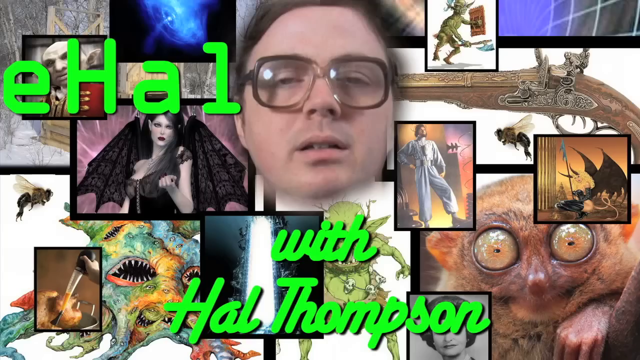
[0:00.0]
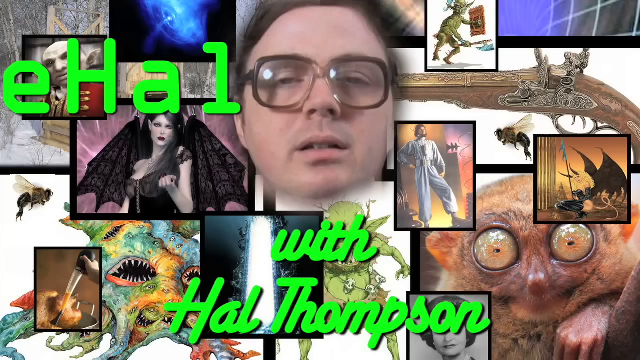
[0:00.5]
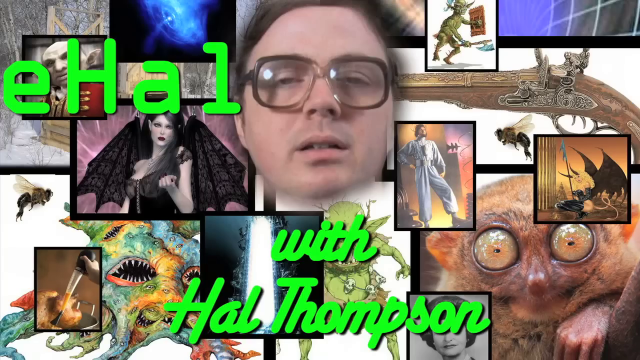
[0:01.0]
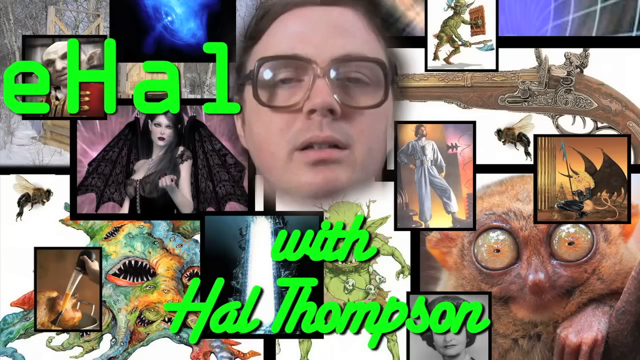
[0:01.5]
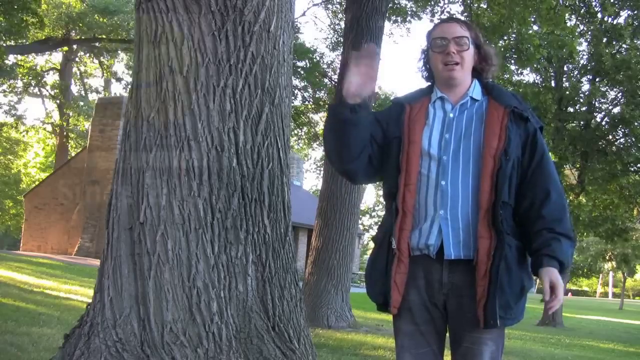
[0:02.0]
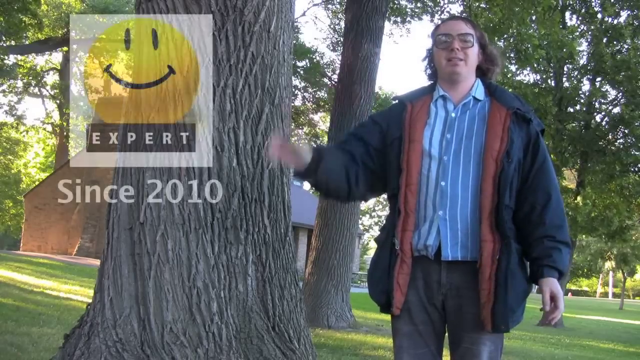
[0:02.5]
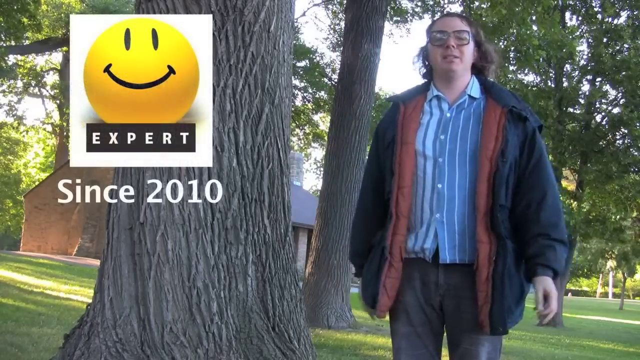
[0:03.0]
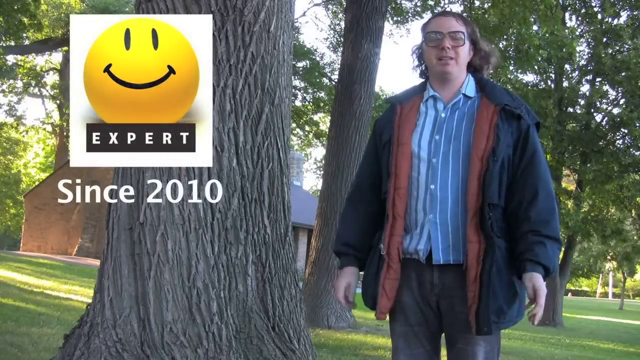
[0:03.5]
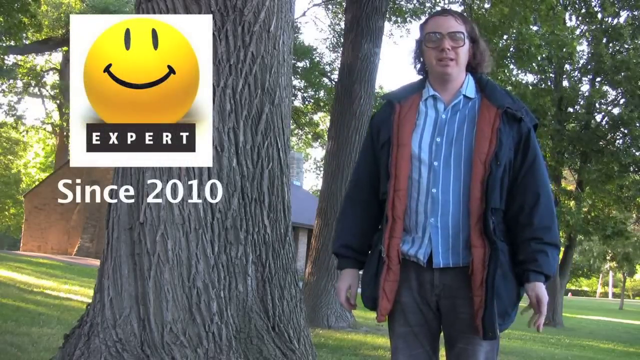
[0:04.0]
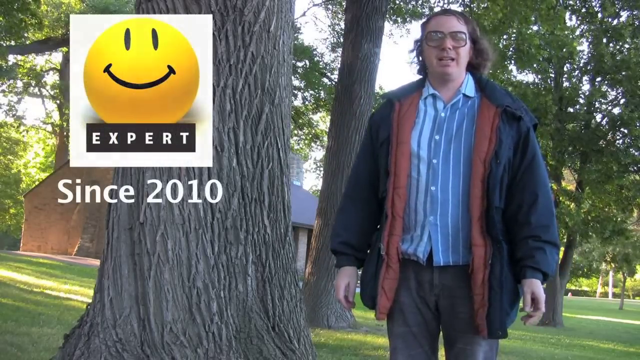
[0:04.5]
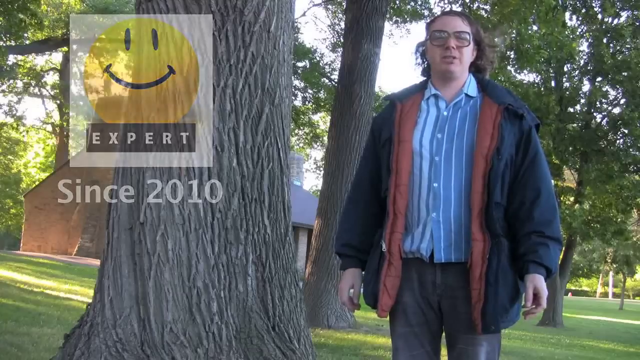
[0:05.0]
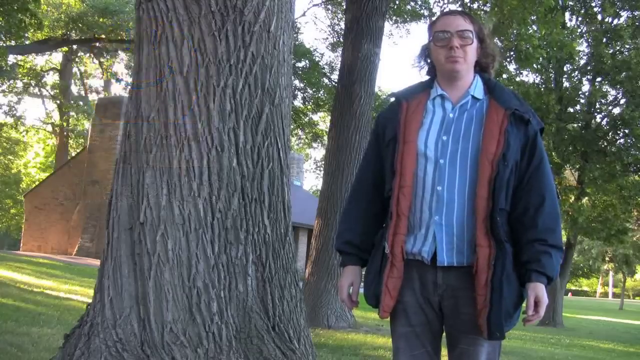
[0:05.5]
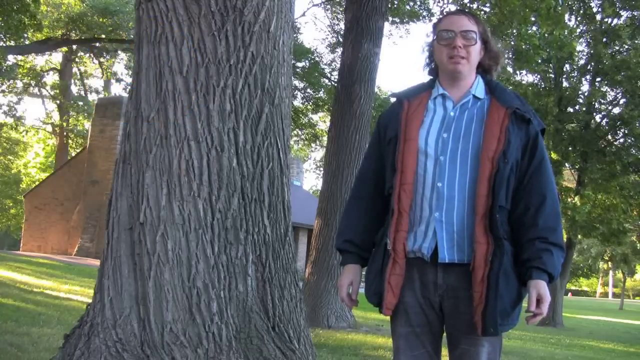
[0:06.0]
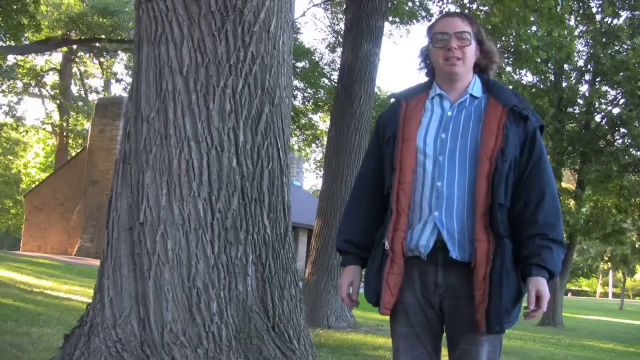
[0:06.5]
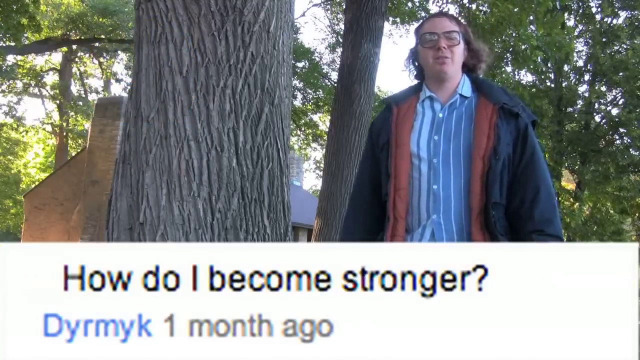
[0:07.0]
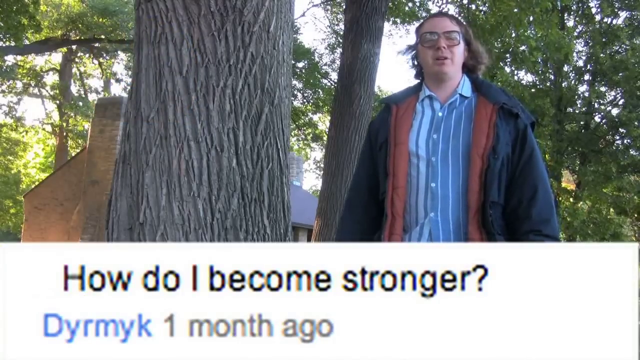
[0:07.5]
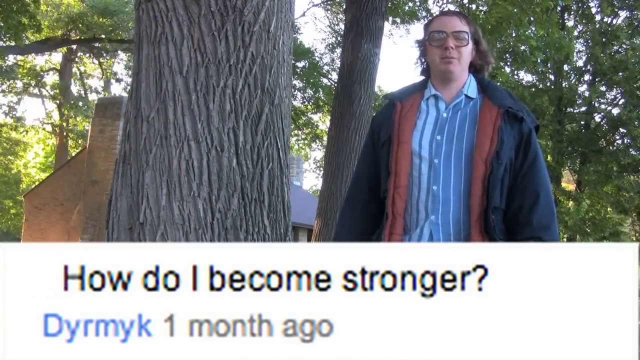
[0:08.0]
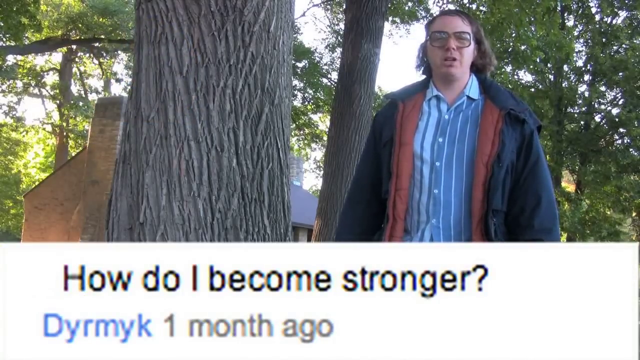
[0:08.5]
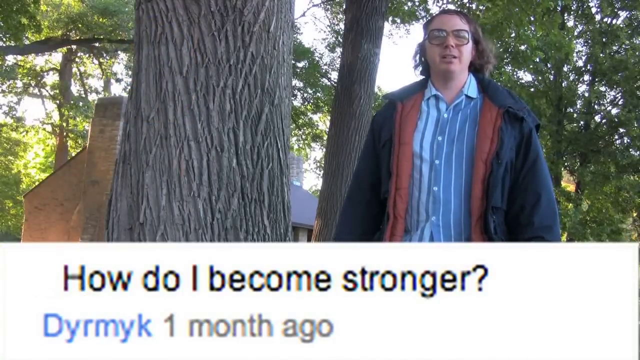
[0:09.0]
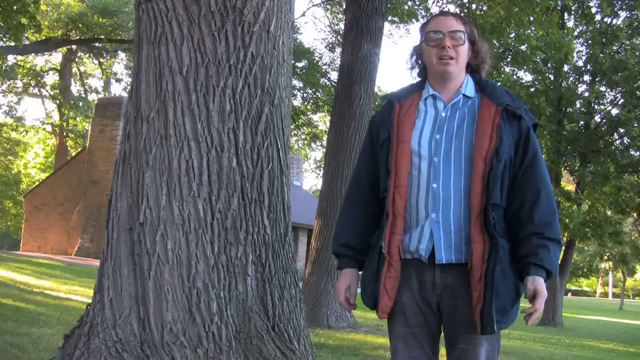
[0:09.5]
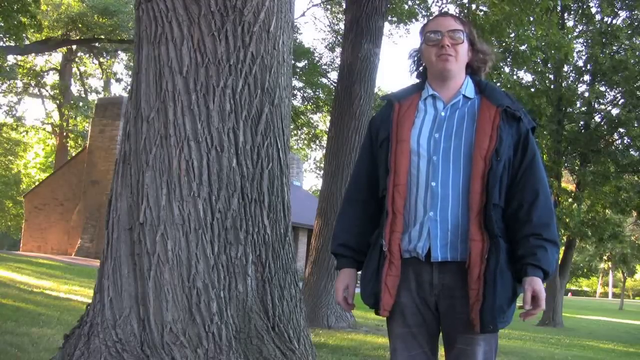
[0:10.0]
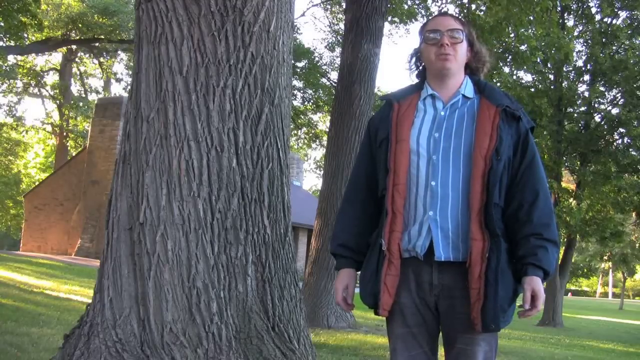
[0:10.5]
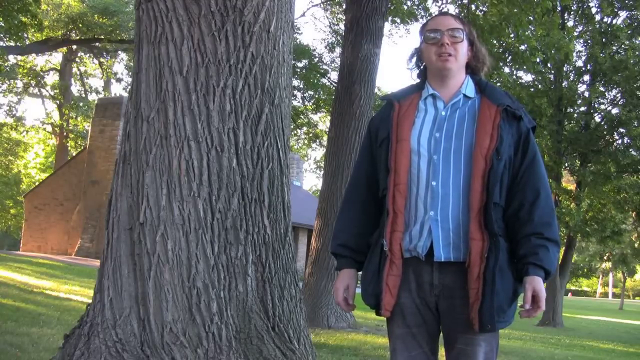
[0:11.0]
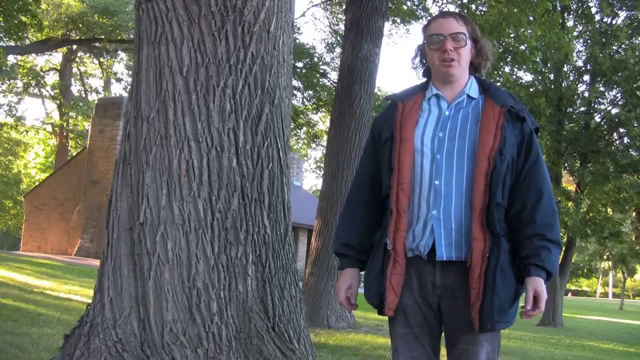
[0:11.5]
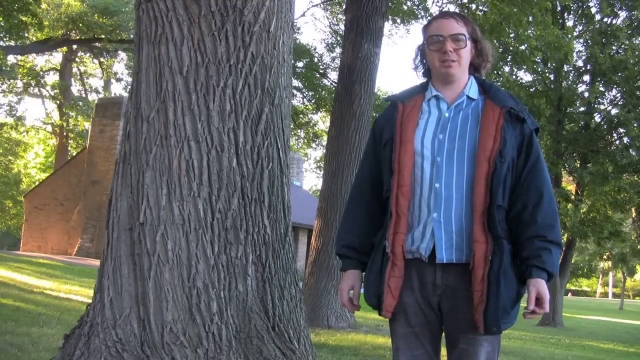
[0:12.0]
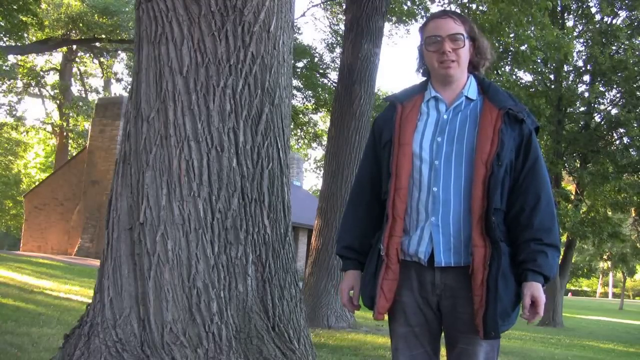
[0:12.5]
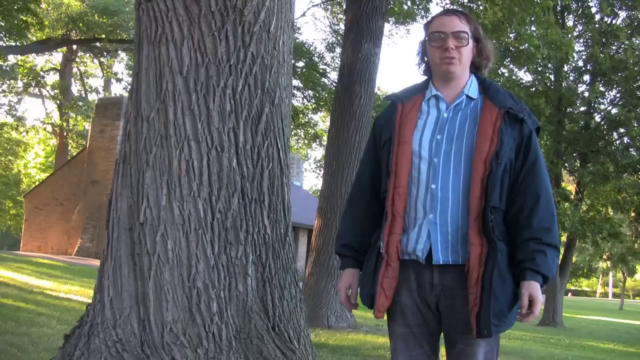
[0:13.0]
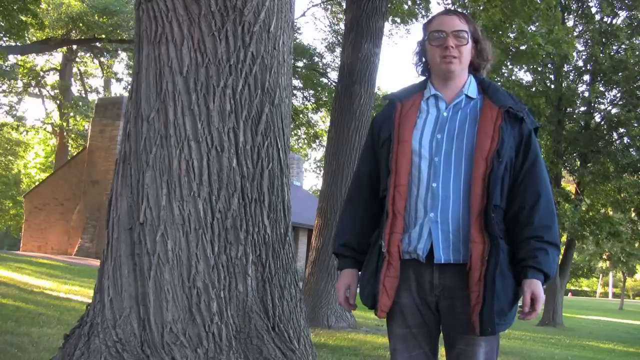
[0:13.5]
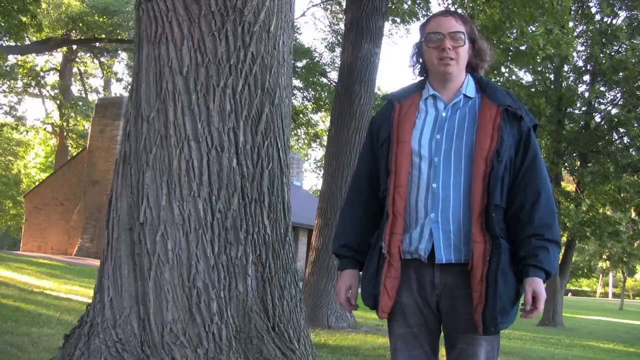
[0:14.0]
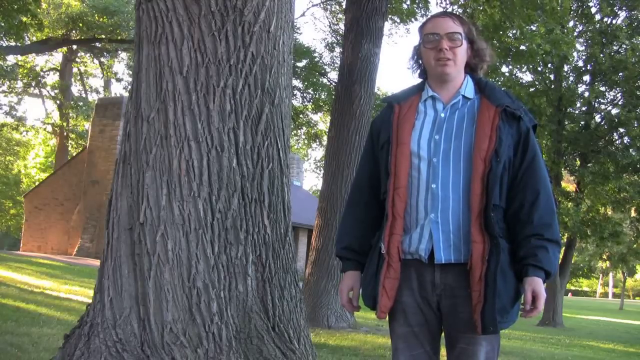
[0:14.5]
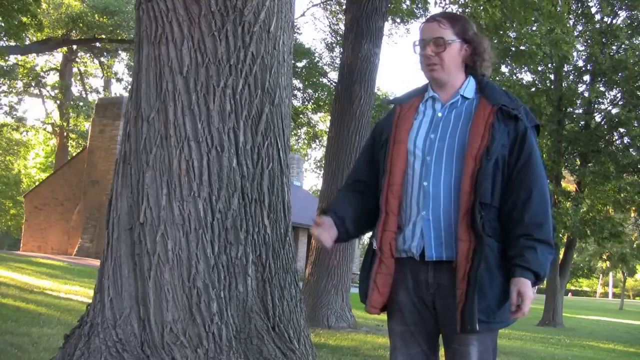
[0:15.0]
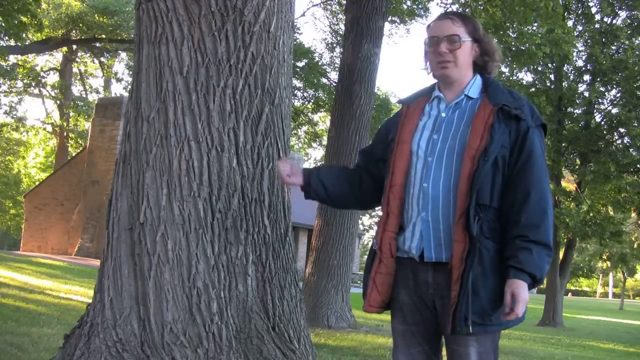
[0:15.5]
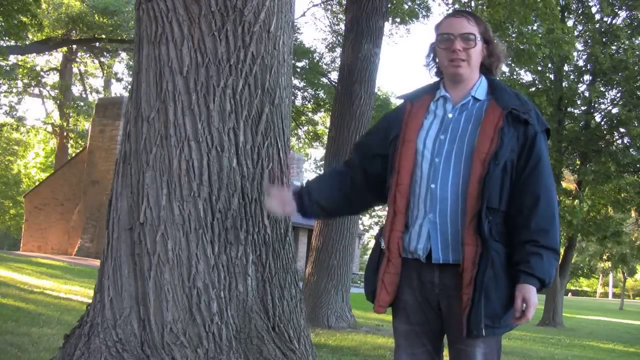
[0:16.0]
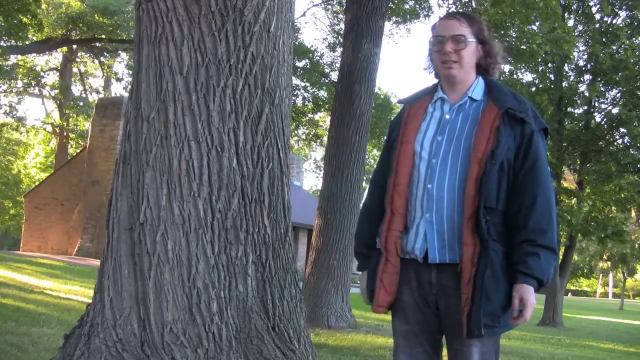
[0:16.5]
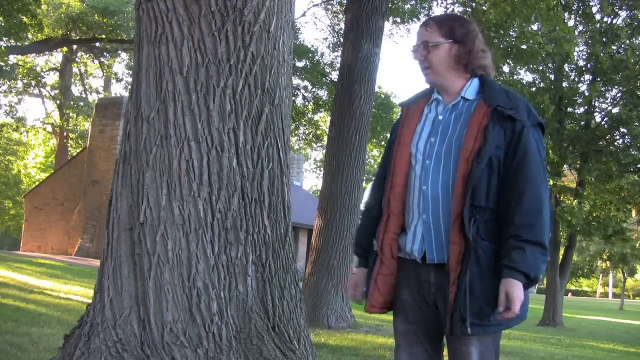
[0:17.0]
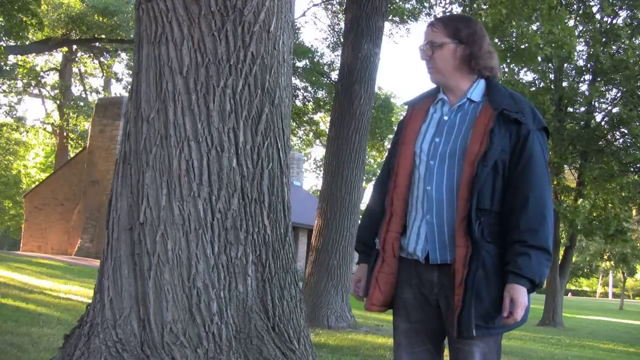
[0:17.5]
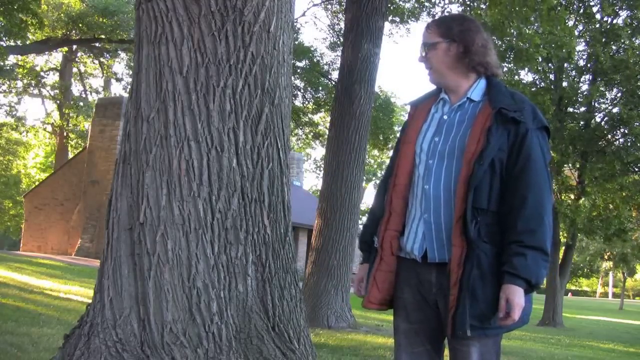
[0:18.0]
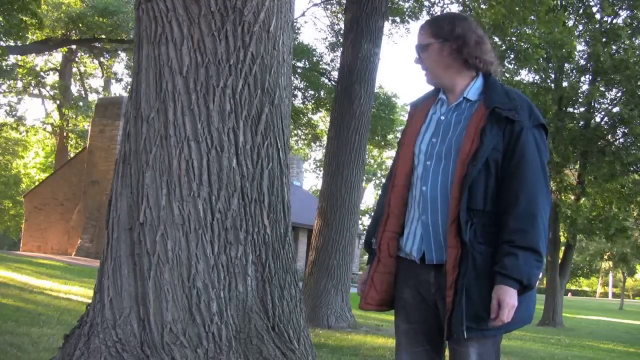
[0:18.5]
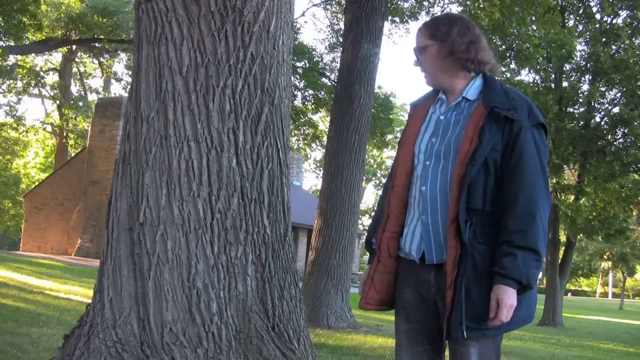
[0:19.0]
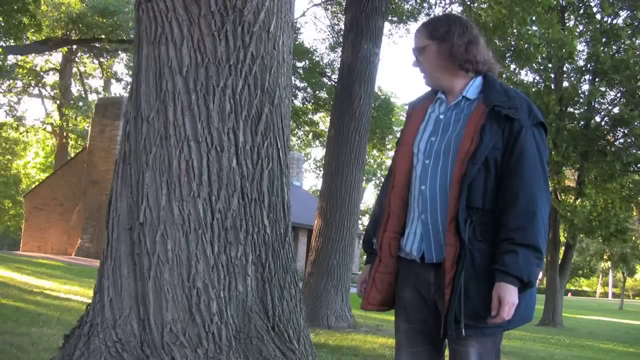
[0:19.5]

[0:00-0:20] A still title screen shows "e how" in green in the top left, and toward the center bottom text that includes "Hal Thompson". Behind the text, a large number of different images overlap one another. The middle image looks like an ordinary person, probably Hal Thompson: a white man with brown-rimmed glasses, only his head visible, with a bit of brown hair showing. Around him are images of bees, bats, gargoyles, demons, women sort of dressed as devils or demons, goblins, a gun, and maybe some monsters; it is hard to make out everything. The shot then changes to what is probably the same man with glasses, seen from about the waist up. He wears an open blue jacket, a shirt with vertical blue and white stripes, and black pants. He is standing next to a tree, with himself on the right and the tree on the left; more trees are in the background, along with a building on the left. Overlaid on the left is a white box with a Walmart-style yellow happy face, and below it, in a black box, white text reads "expert"; below the white box, white text reads "since 2010". This overlay disappears quickly, and the man talks to the camera. A white bar then appears at the bottom of the screen with black text reading "how do I become stronger?", attributed to someone named DYRMYK, posted one month ago. The bar disappears and the man keeps talking, then sort of motions at the tree beside him and looks at it.